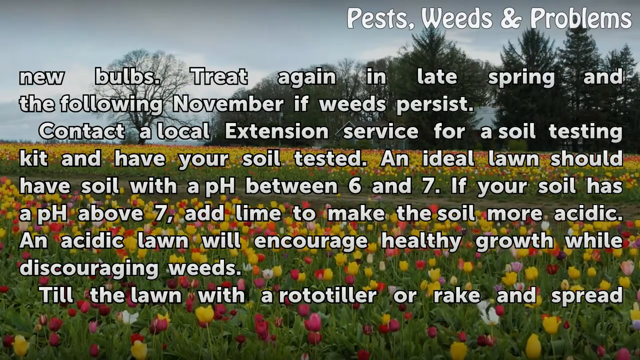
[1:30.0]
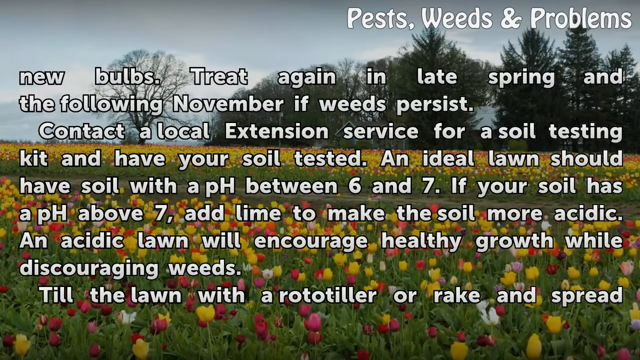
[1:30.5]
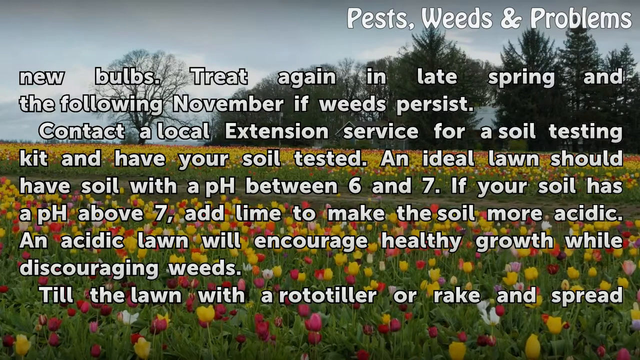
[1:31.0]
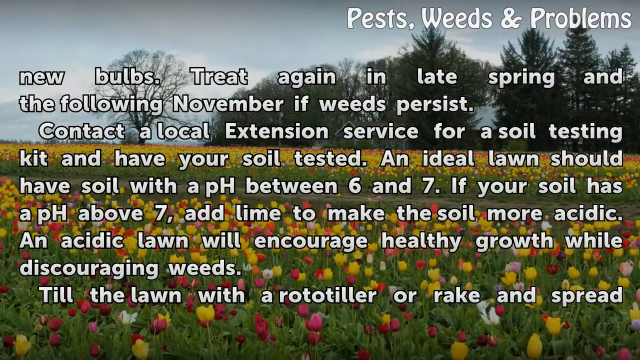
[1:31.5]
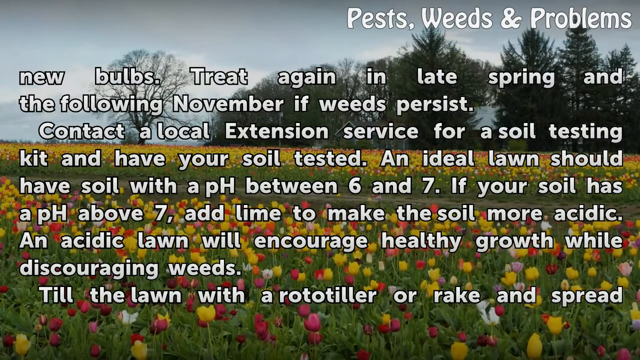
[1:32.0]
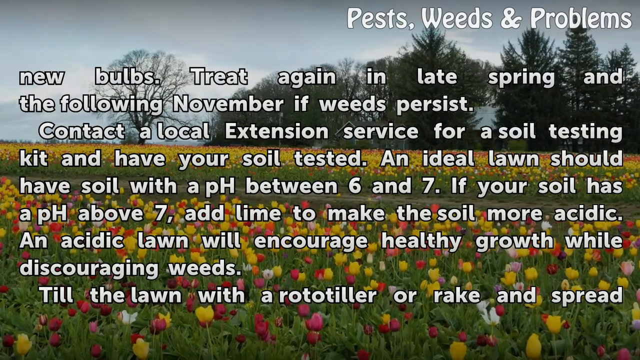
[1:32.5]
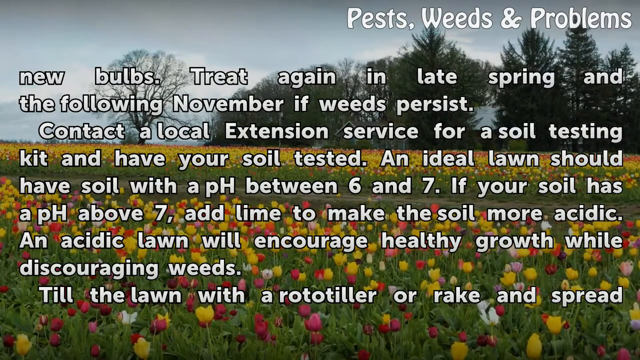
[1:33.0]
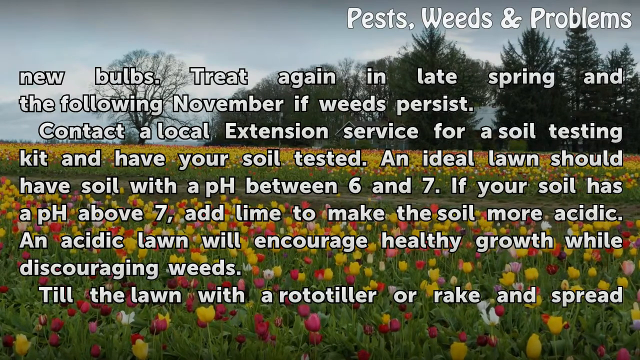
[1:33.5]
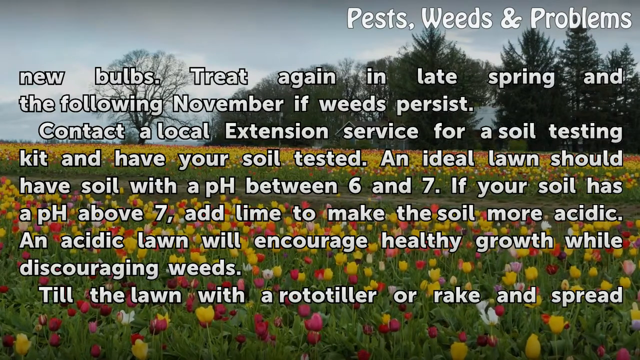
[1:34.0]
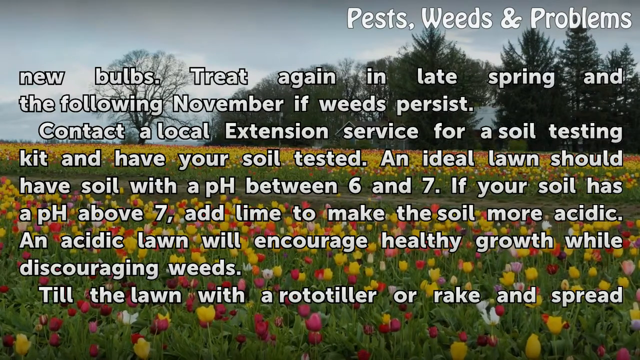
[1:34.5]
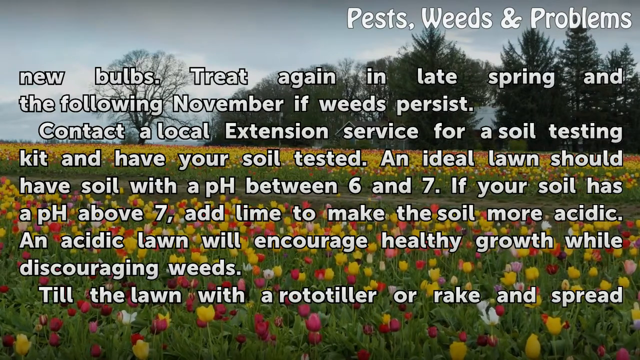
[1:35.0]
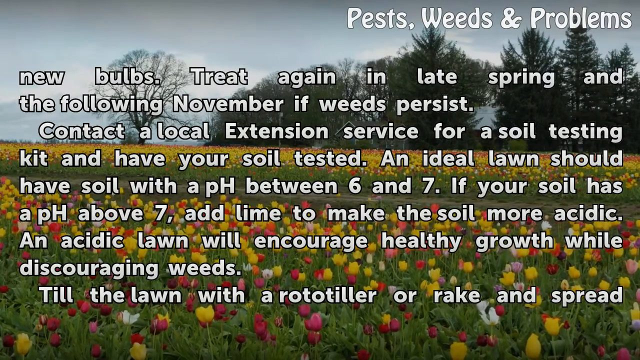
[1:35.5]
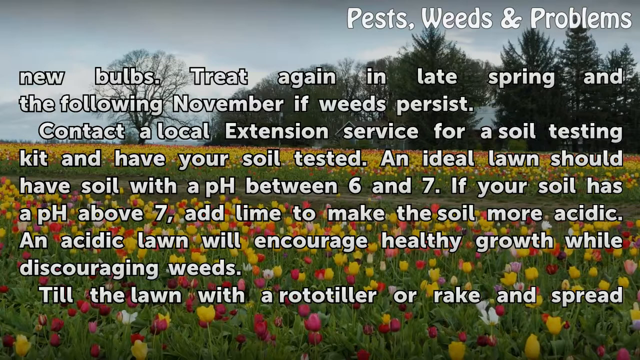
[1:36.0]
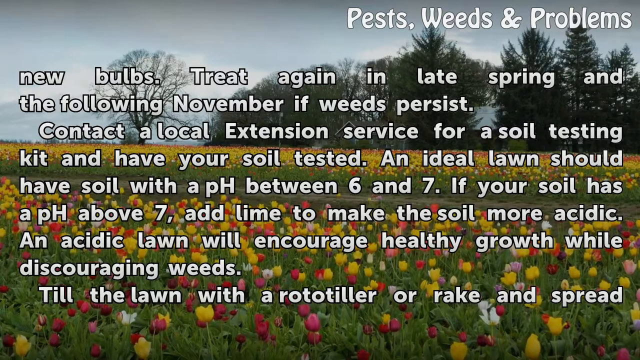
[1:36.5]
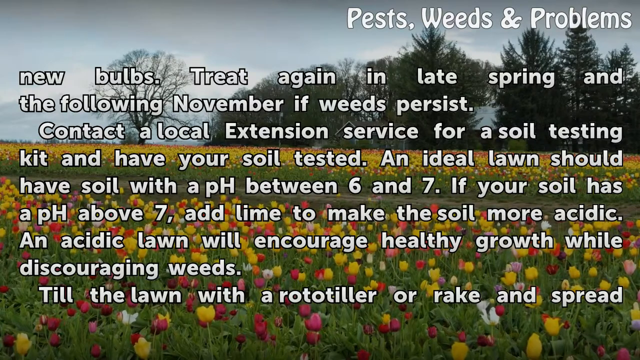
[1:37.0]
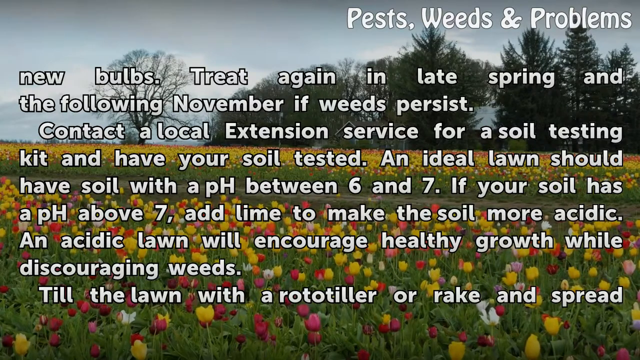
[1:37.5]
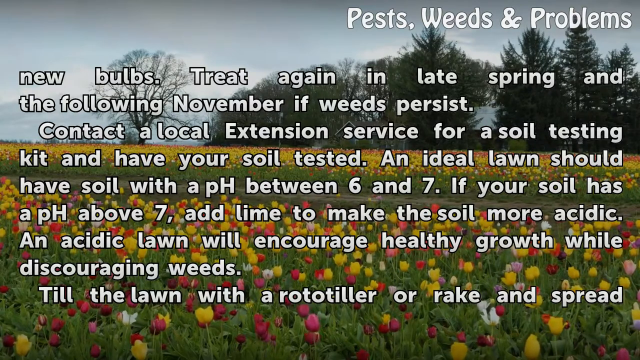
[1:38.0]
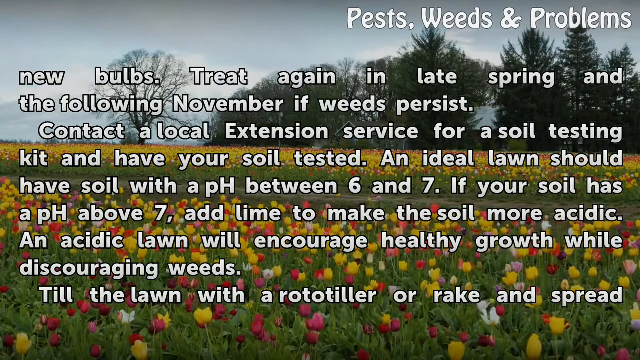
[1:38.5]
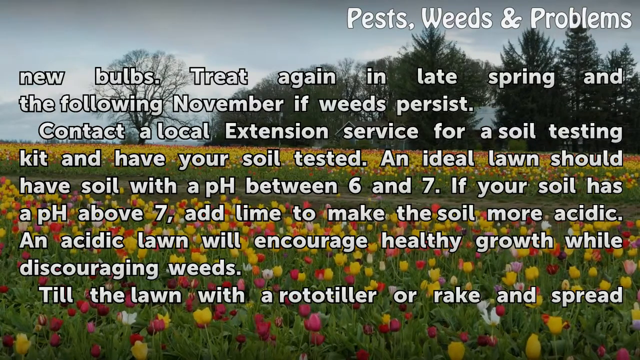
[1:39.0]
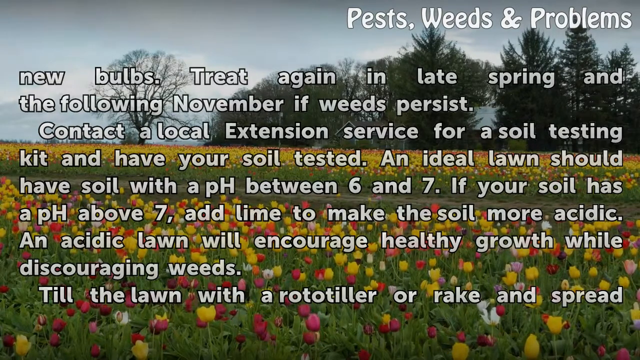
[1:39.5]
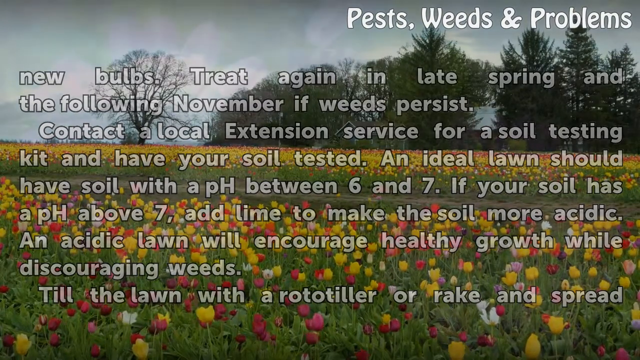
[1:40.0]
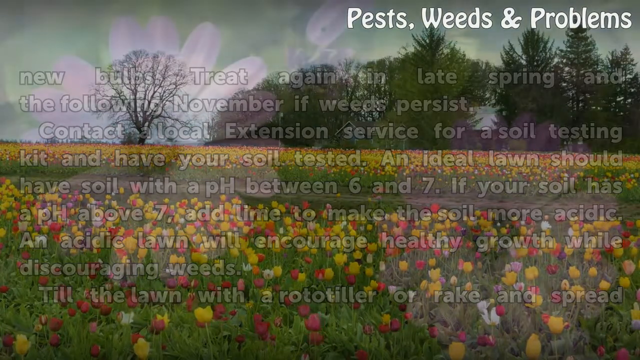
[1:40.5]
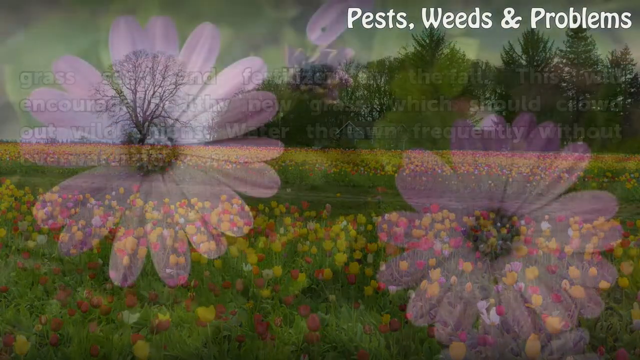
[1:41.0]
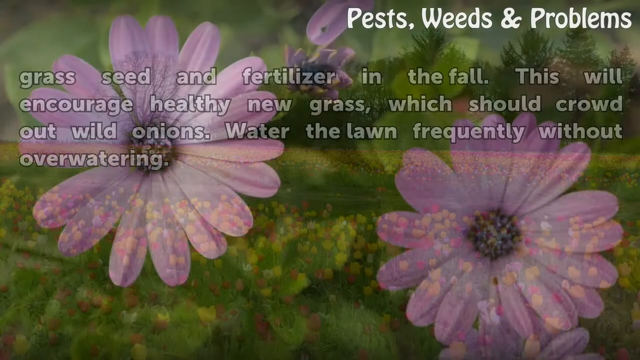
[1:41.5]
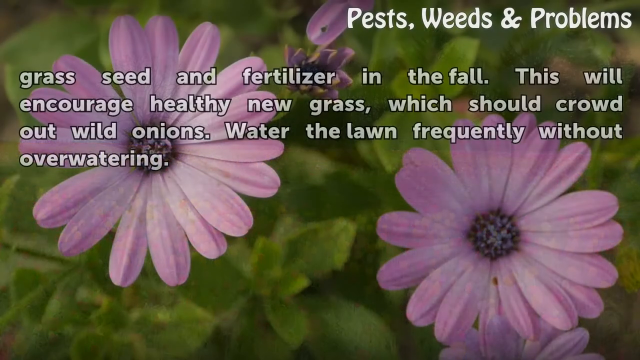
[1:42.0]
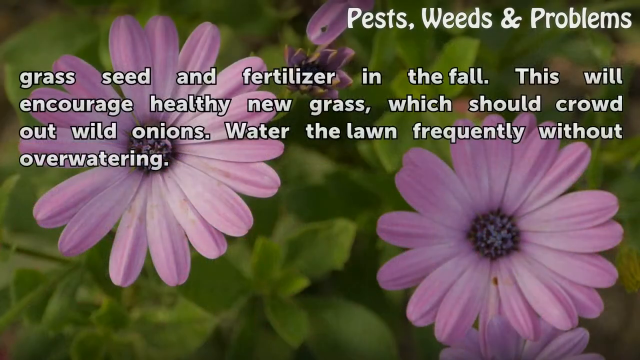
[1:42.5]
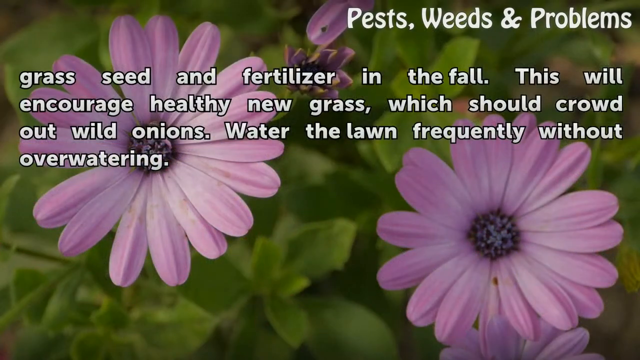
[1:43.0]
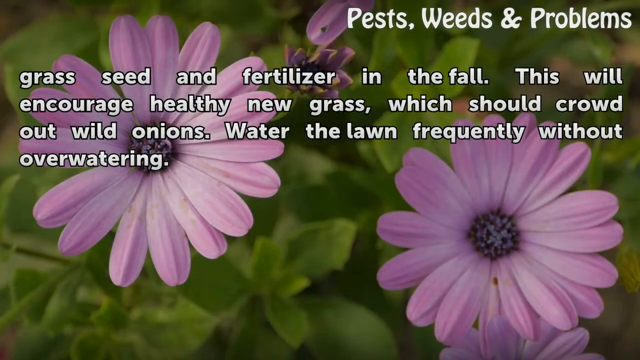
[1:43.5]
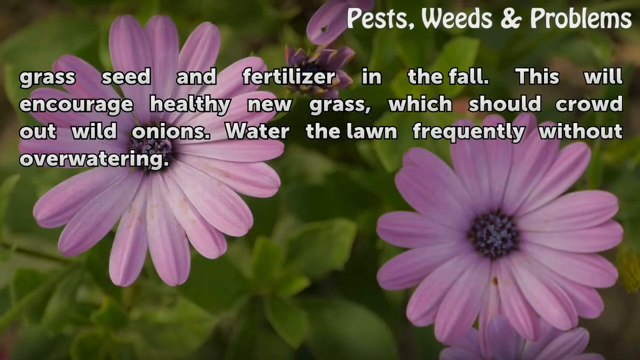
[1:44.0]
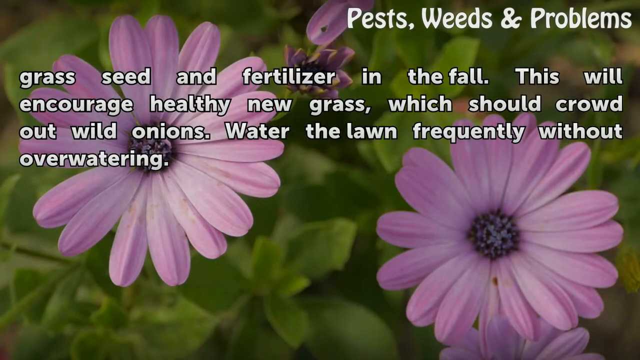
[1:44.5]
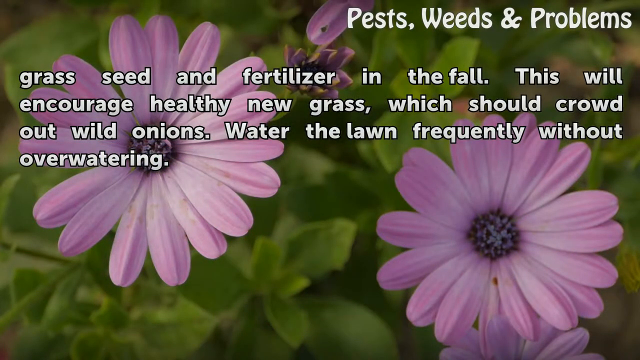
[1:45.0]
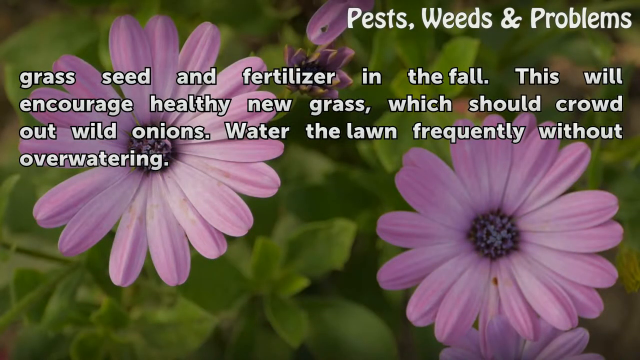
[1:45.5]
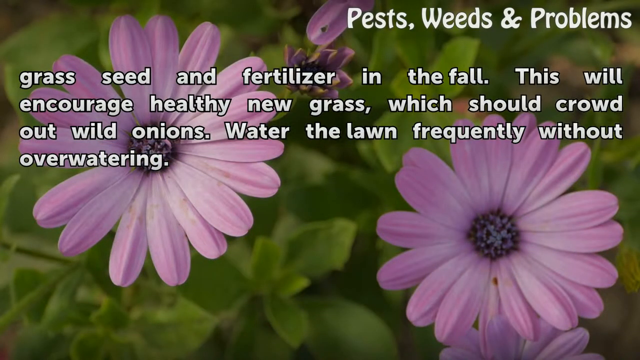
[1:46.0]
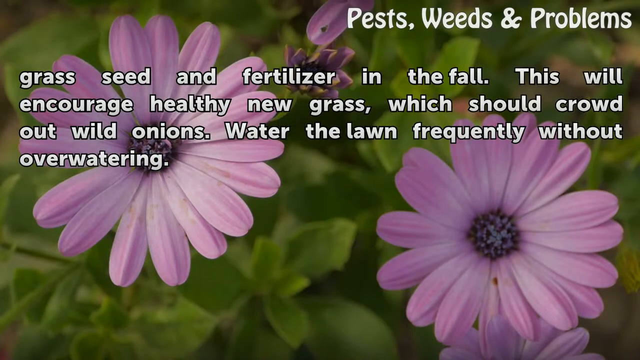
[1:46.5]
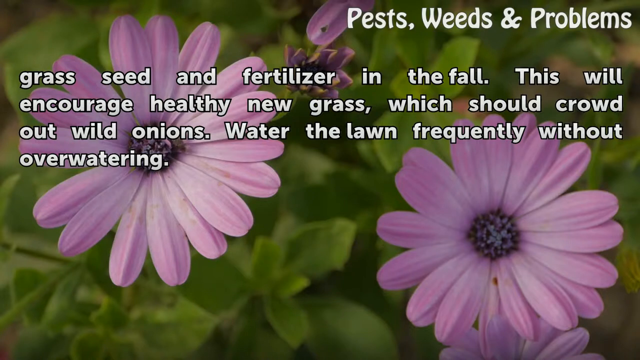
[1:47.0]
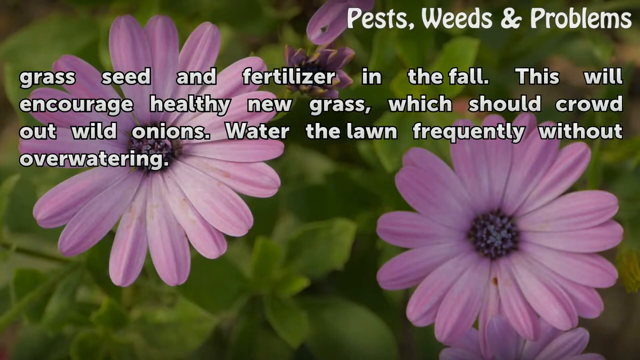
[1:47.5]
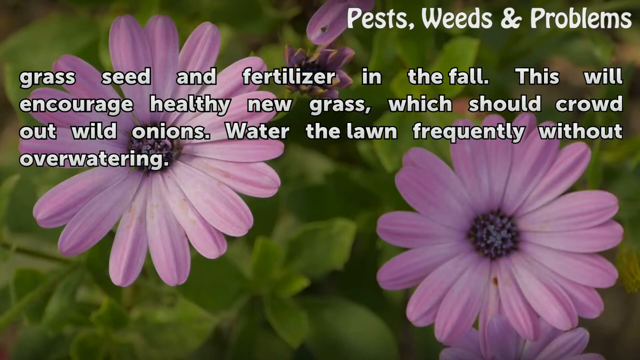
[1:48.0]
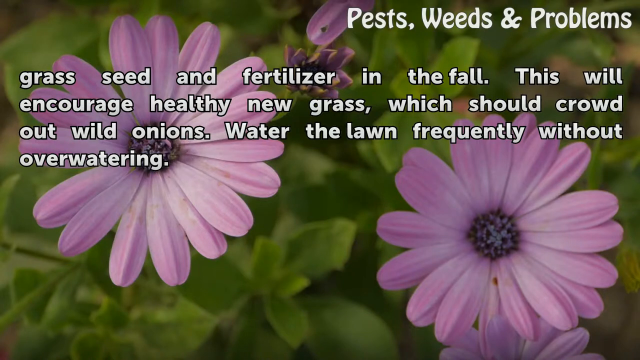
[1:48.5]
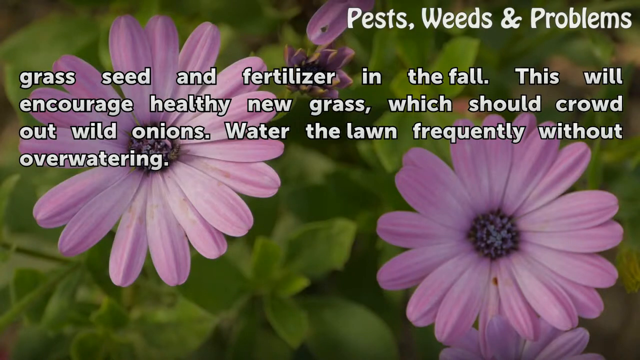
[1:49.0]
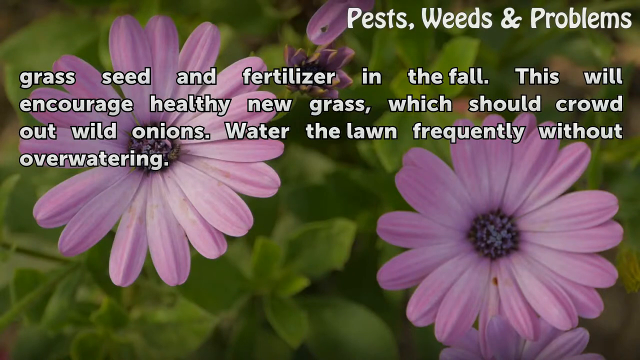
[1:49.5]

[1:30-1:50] The field of tulips divided by the dirt road is still shown, with the instructions for getting rid of weeds in a normal lawn on screen. After a few more seconds the text slowly disappears, and one or two seconds later the video transitions to a picture of two purple flowers that seem to be forget-me-nots. More text appears, continuing the instructions: "grass seed and fertilizer in the fall. This will encourage healthy new grass, which should crowd out wild onions, water the lawn frequently without overwatering." This picture stays for over five to six seconds; there is less text than in the previous ones.